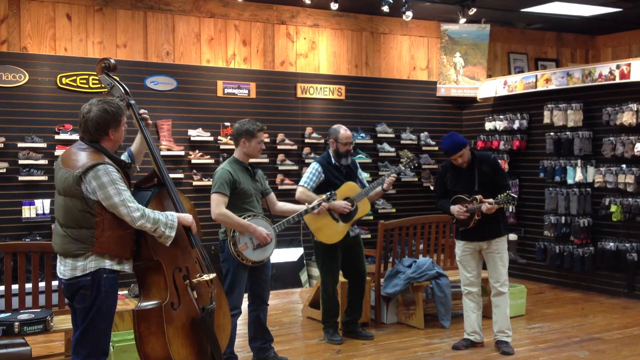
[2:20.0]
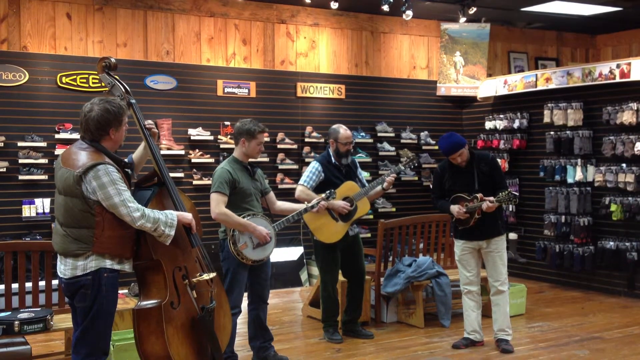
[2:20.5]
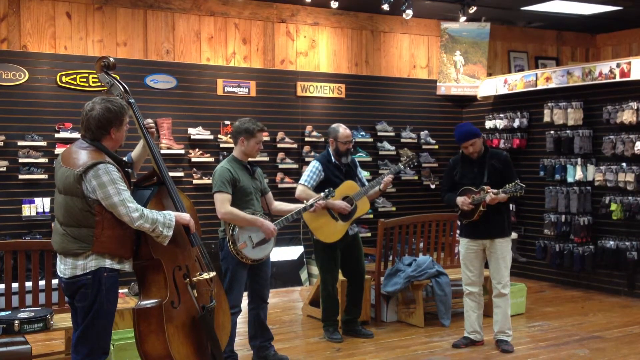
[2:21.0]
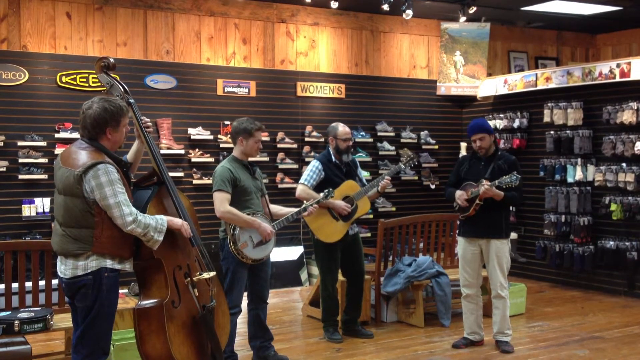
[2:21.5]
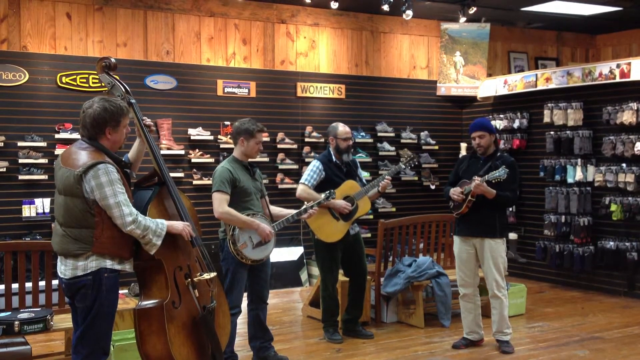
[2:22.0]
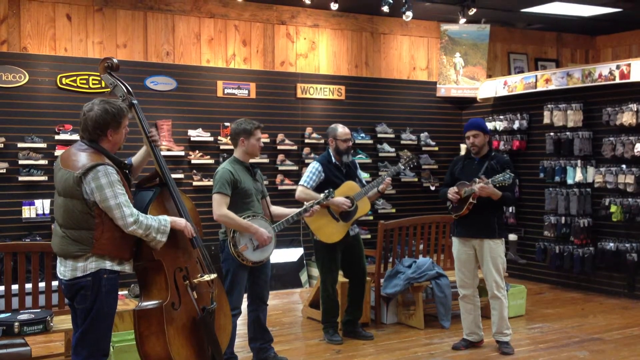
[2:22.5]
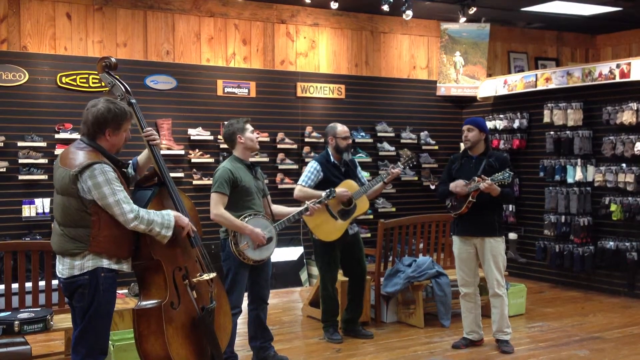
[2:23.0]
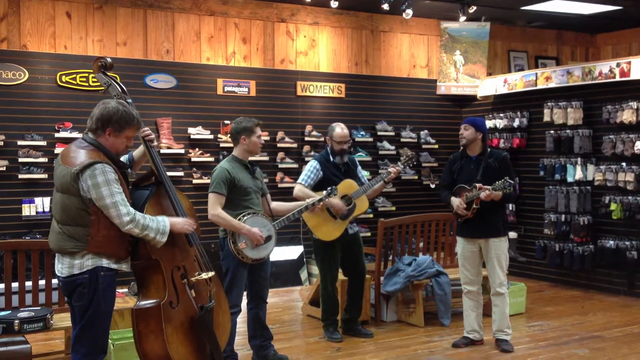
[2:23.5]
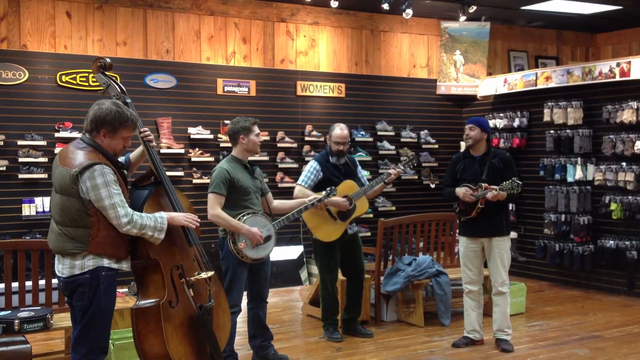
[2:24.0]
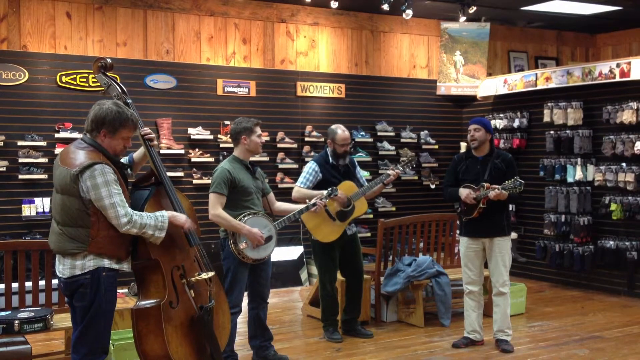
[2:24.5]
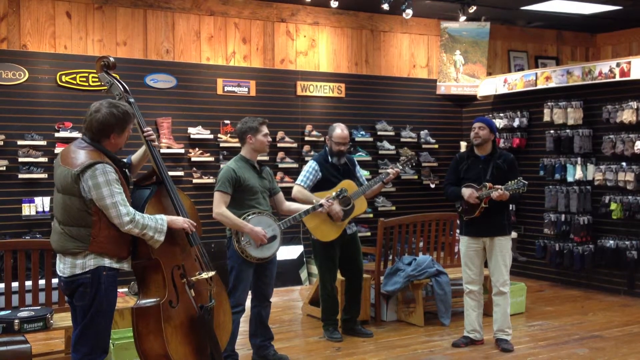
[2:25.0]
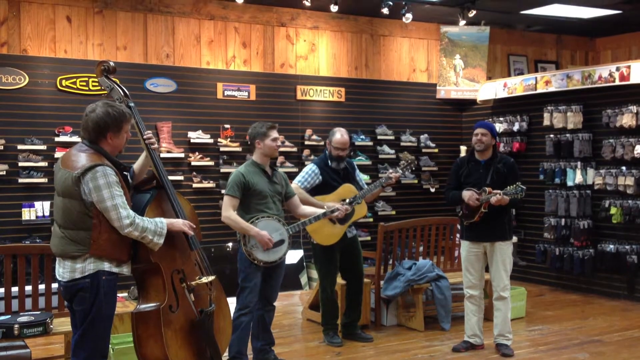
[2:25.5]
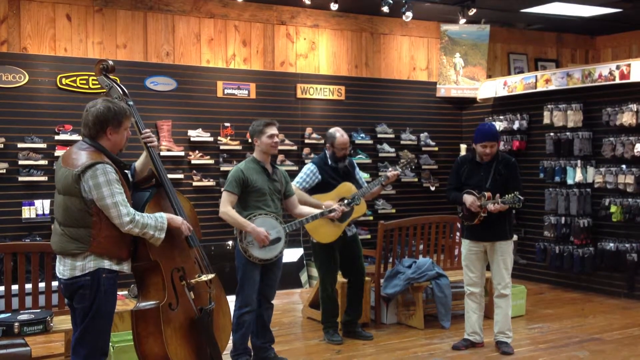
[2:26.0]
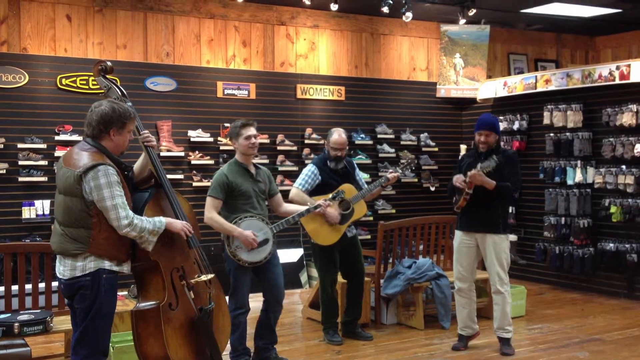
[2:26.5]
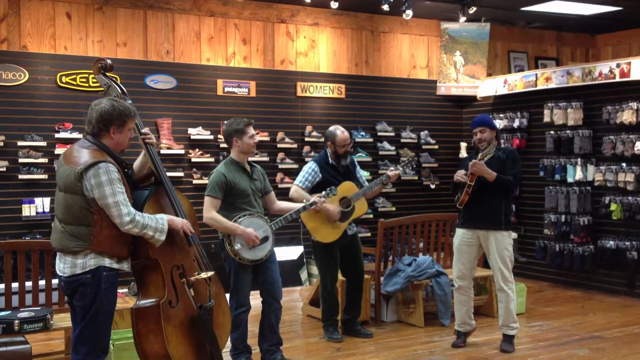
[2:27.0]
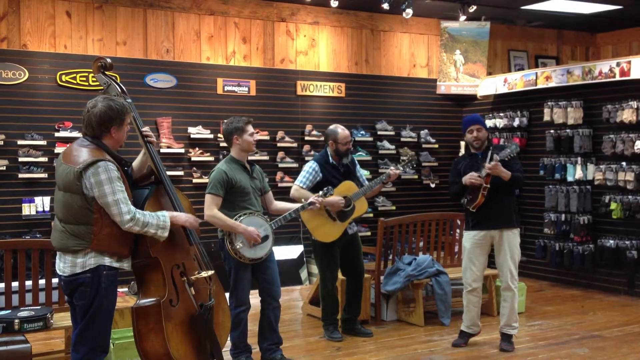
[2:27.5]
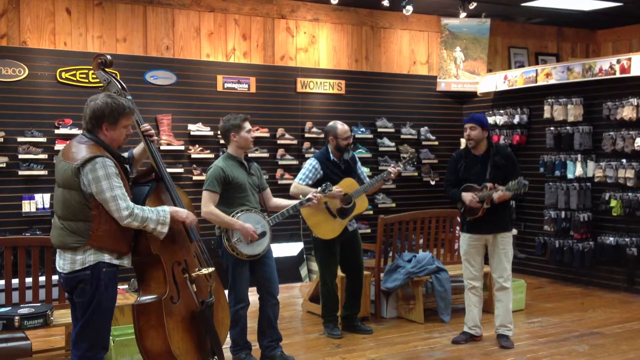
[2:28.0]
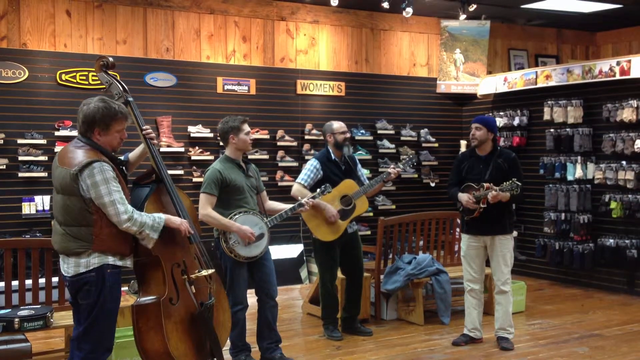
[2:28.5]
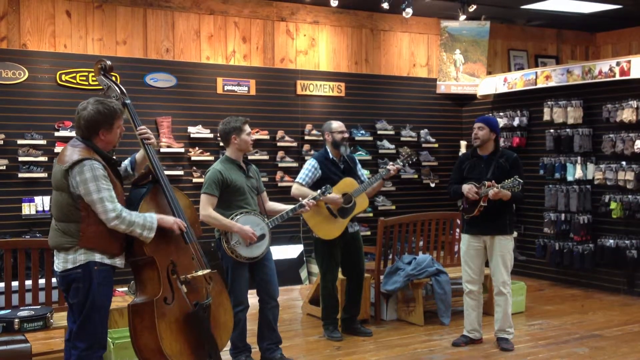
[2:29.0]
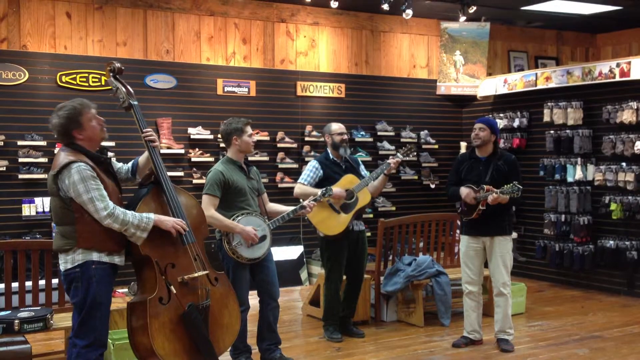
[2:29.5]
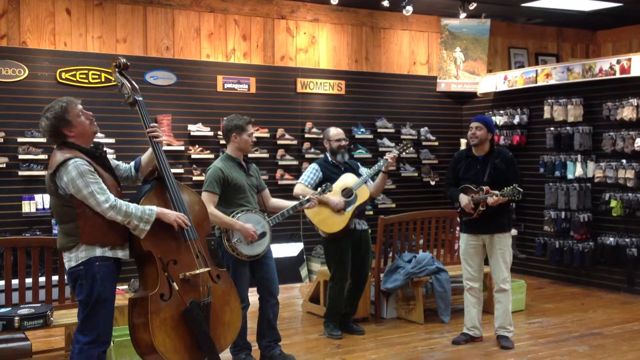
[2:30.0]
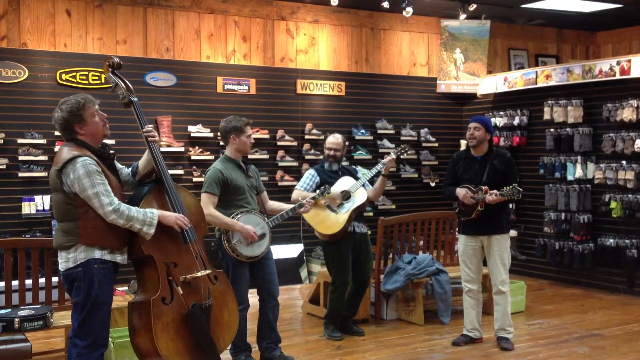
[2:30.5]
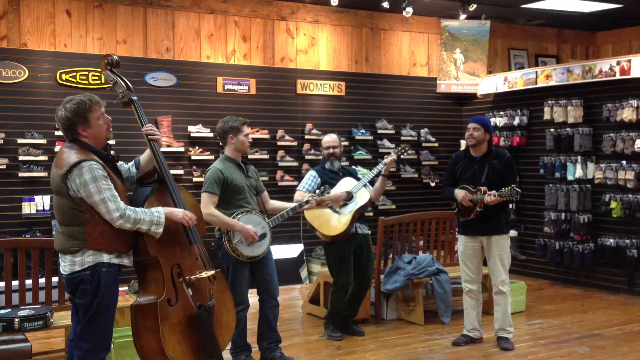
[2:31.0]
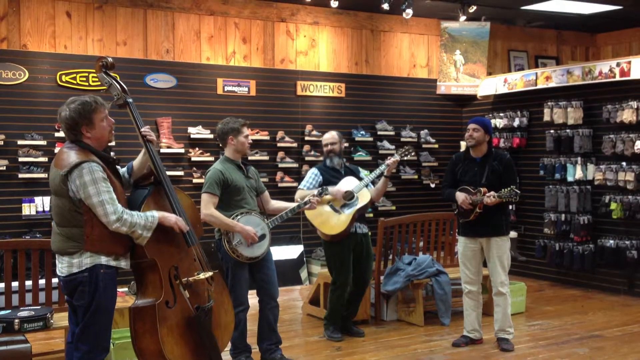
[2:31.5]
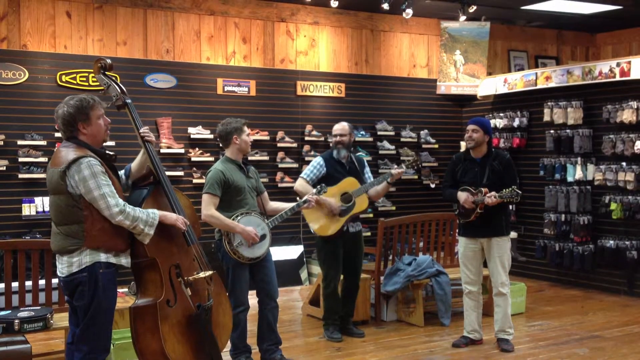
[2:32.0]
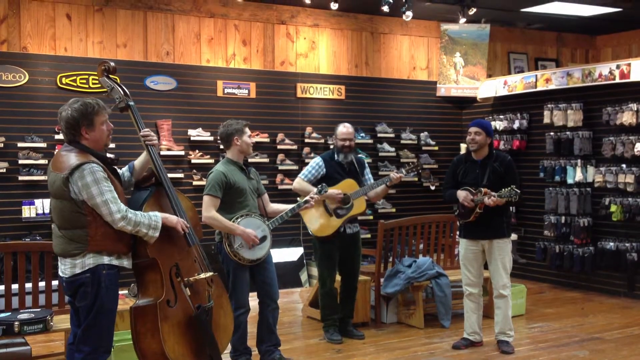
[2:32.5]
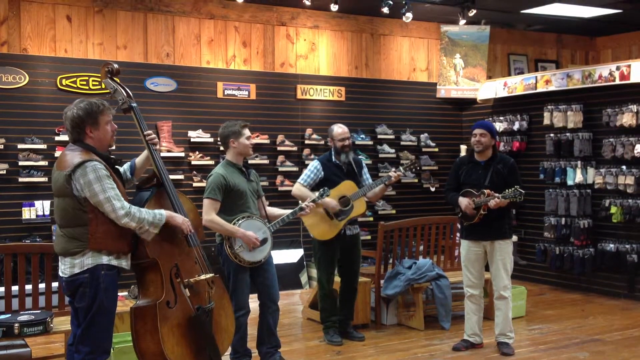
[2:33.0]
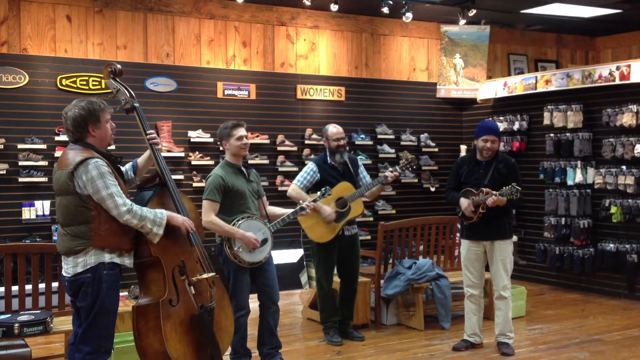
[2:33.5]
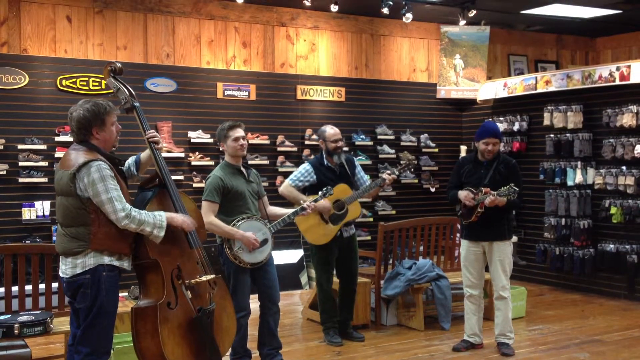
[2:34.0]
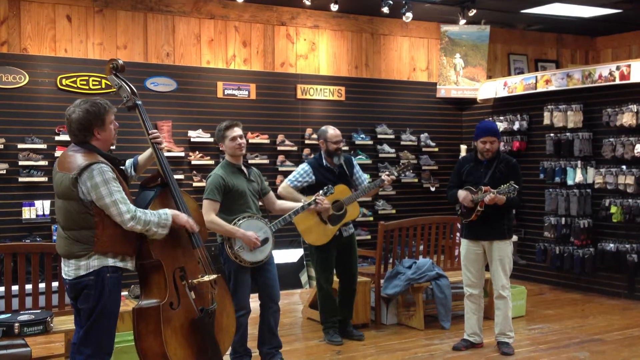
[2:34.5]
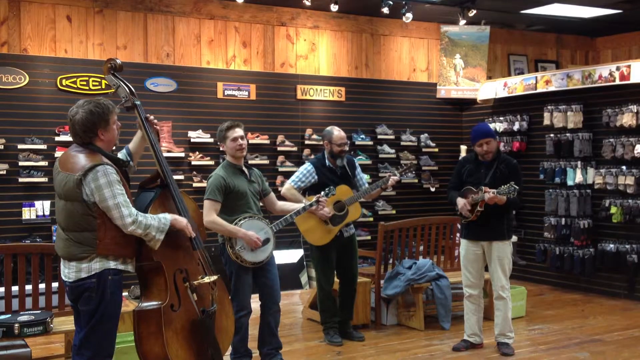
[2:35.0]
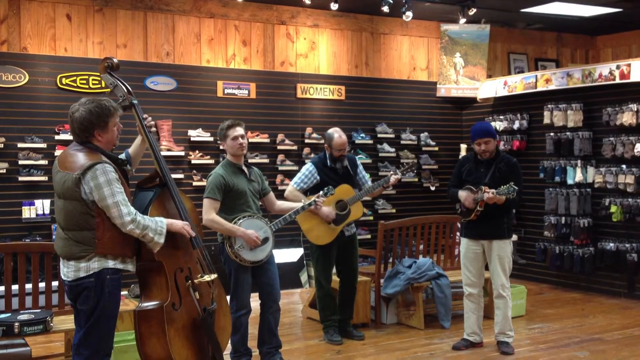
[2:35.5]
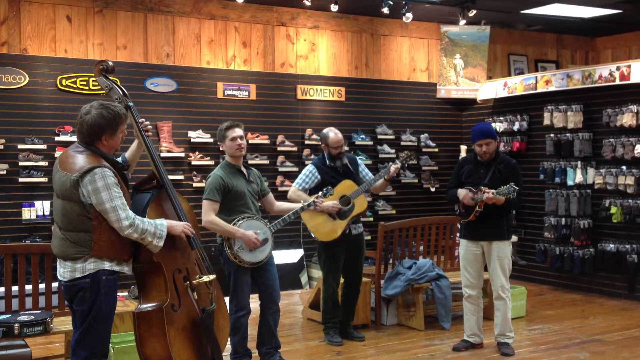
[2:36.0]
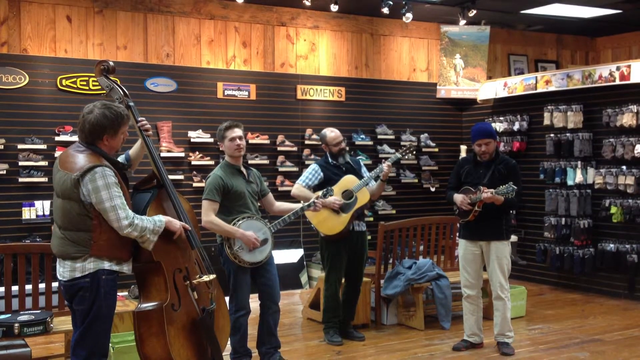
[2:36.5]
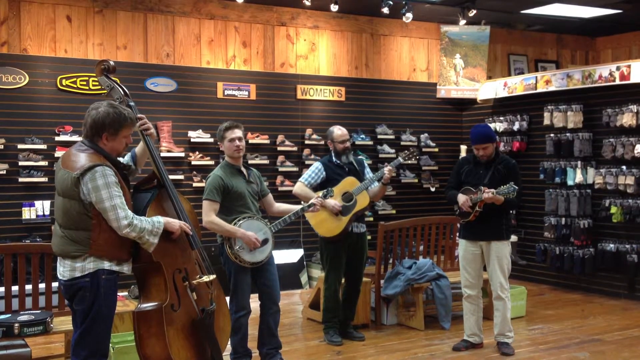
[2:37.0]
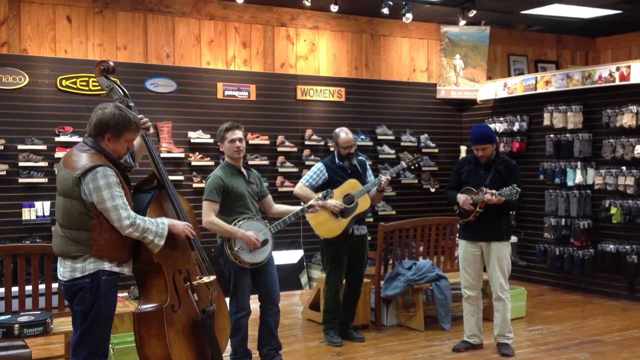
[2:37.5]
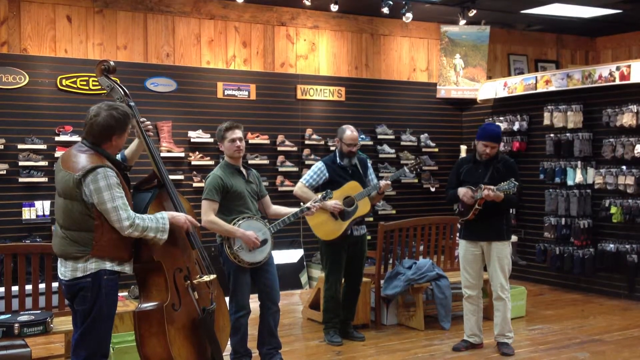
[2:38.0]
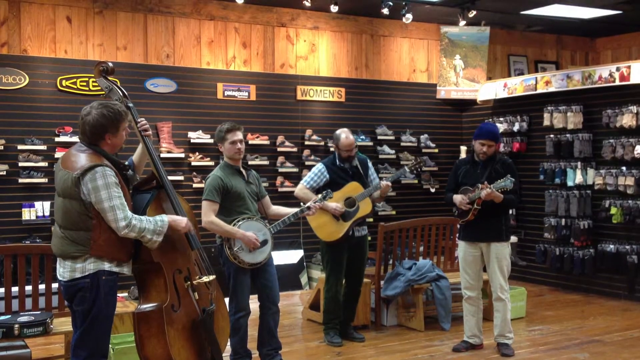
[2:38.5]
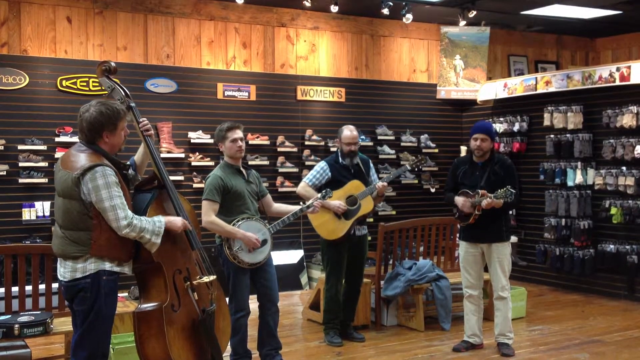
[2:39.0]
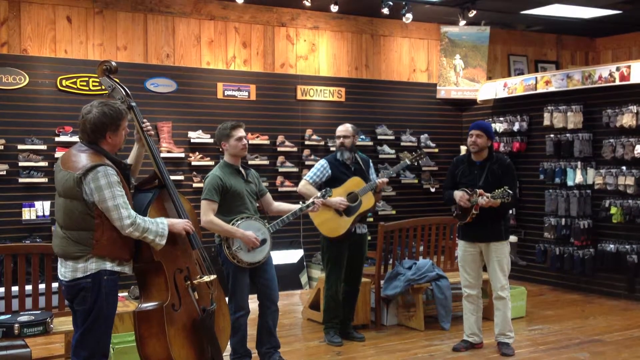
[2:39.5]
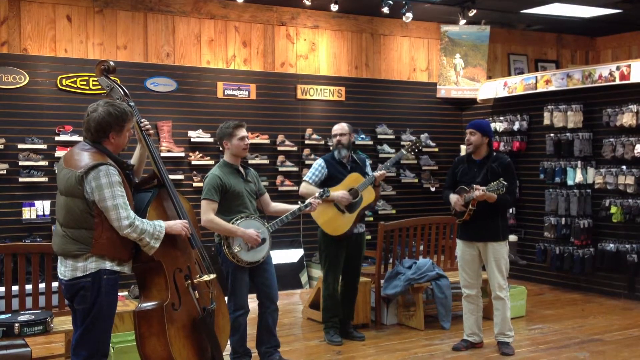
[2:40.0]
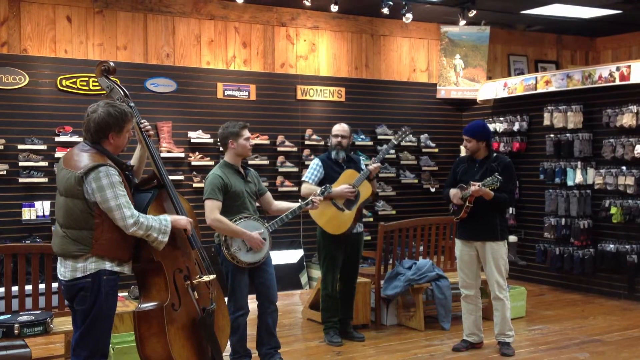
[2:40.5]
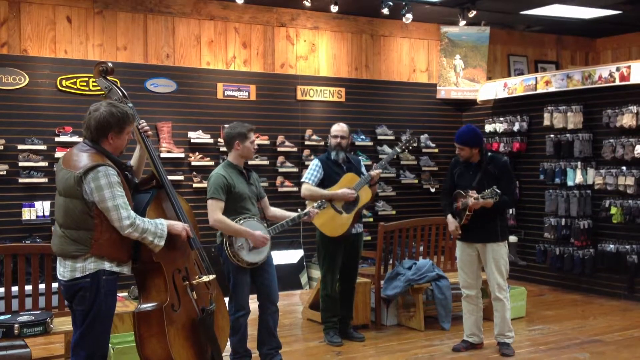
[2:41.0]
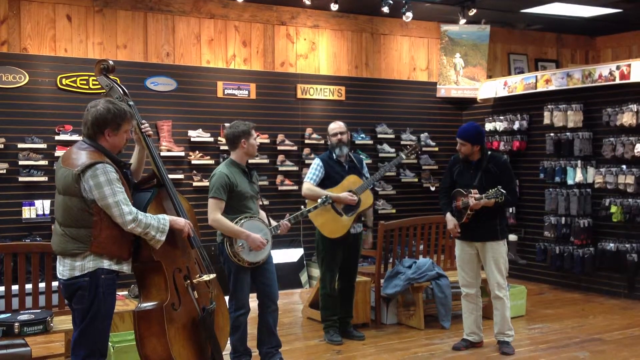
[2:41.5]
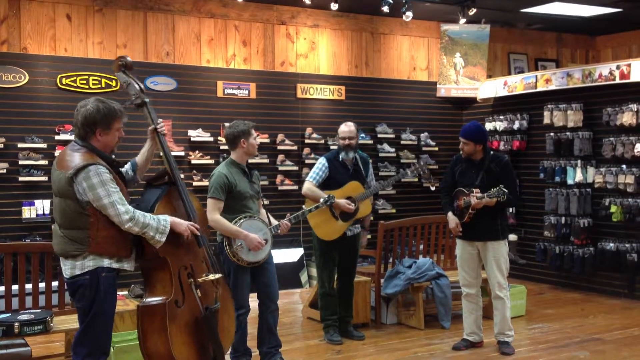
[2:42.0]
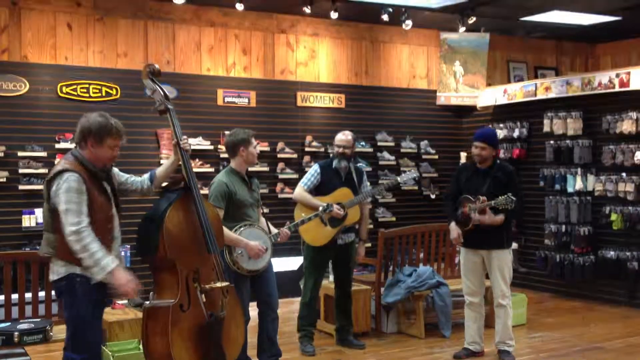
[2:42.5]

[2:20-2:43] The men are wrapping up the song, moving back and forth, bobbing their heads, and slowing down on the instruments, with pauses as if the song is starting to fade out. There is still some singing, a few words: the man with the small guitar sings, and the cello player plays and starts singing a little, maybe drawing out the last verses slowly. The acoustic player plays hard and smiles. The banjo player bobs his head and says something, either singing or making a comment to the others. The man with the small guitar gets up on his toes and bends at his knees as he plays the last riff, and the acoustic player kind of does something similar. Then they all stop playing, and the song is over.